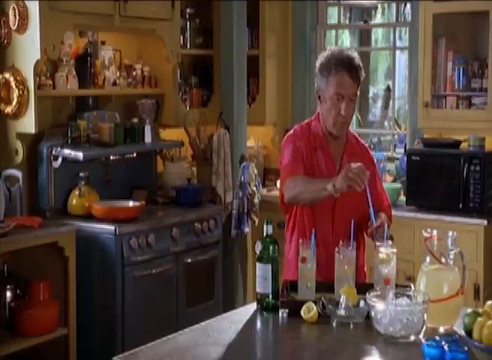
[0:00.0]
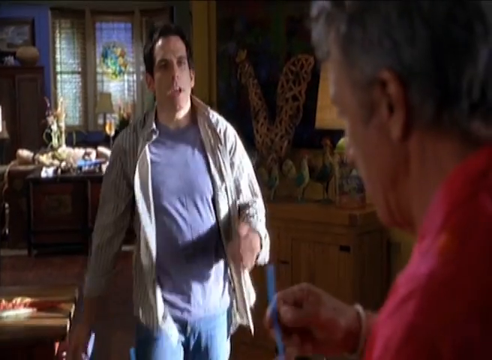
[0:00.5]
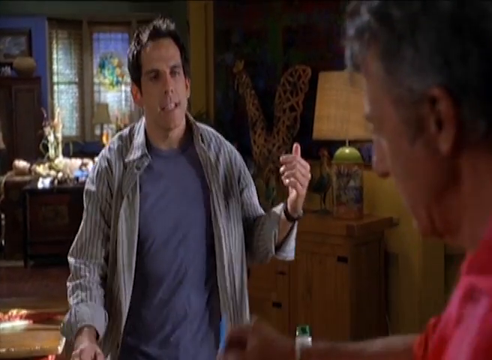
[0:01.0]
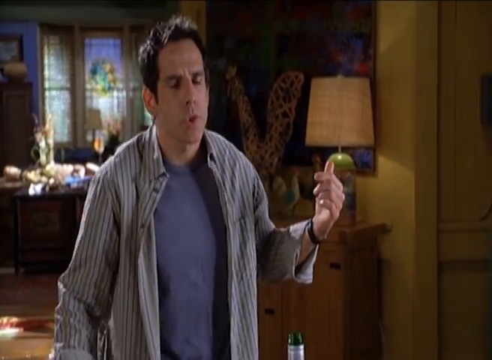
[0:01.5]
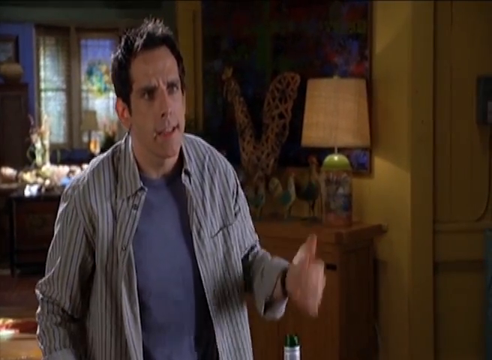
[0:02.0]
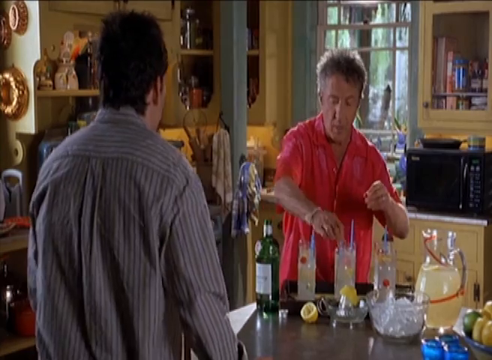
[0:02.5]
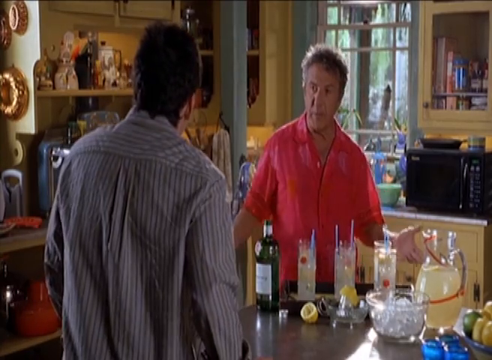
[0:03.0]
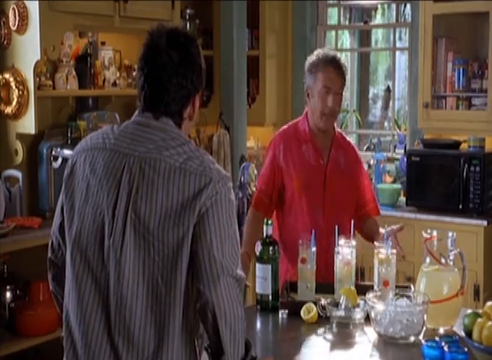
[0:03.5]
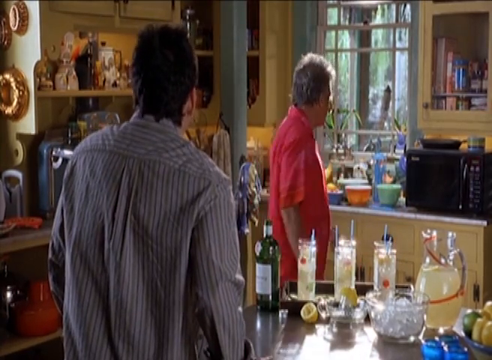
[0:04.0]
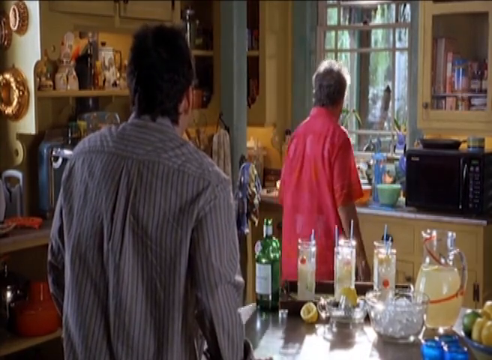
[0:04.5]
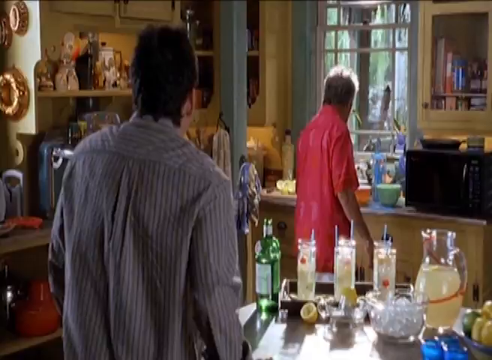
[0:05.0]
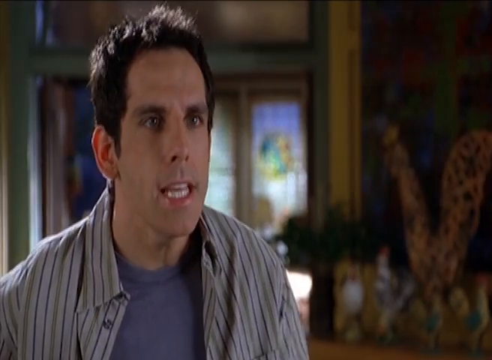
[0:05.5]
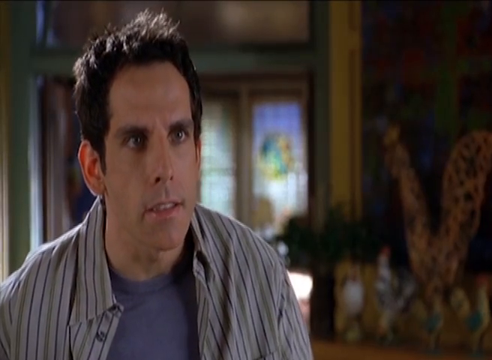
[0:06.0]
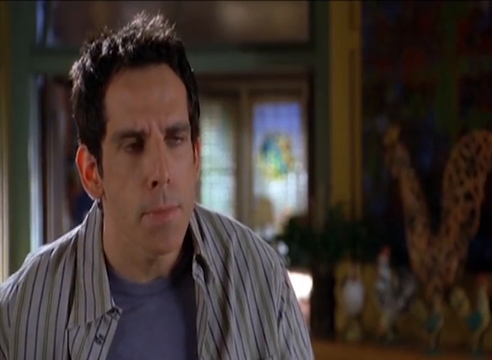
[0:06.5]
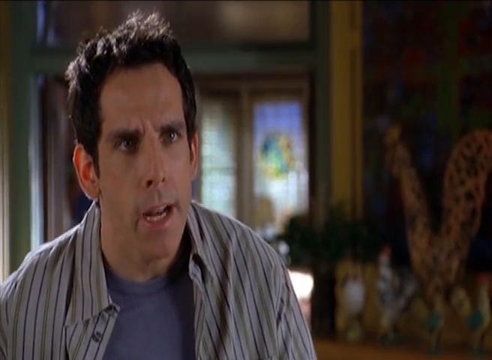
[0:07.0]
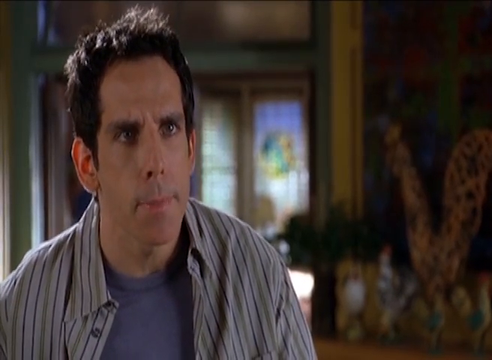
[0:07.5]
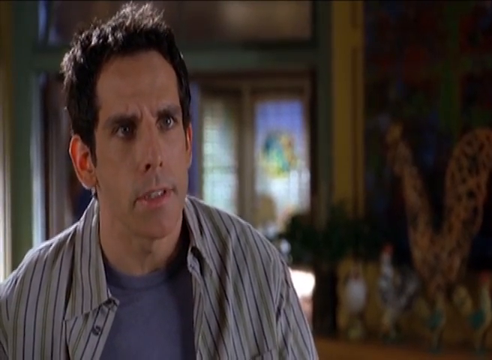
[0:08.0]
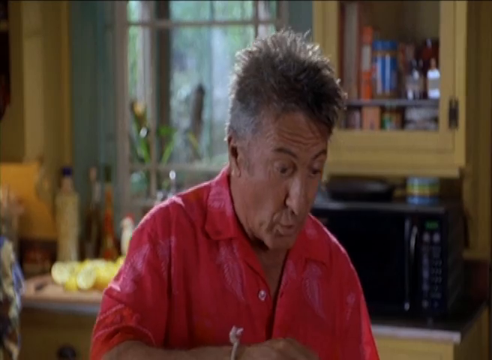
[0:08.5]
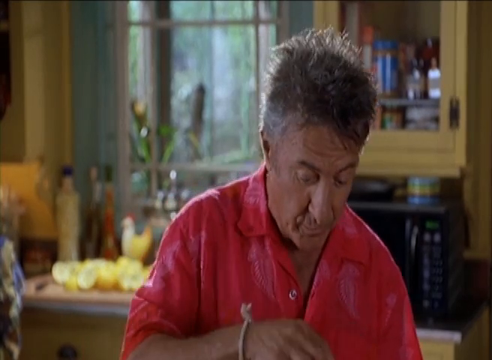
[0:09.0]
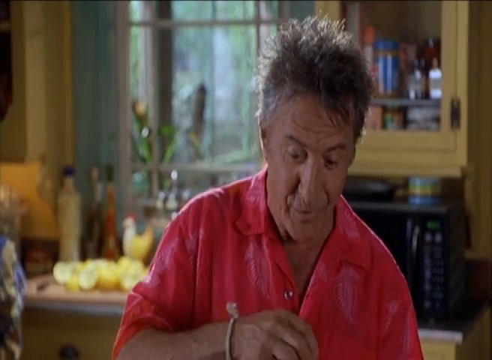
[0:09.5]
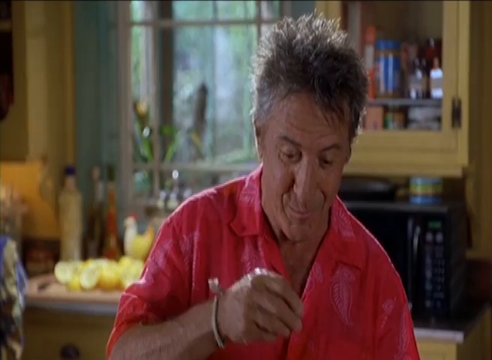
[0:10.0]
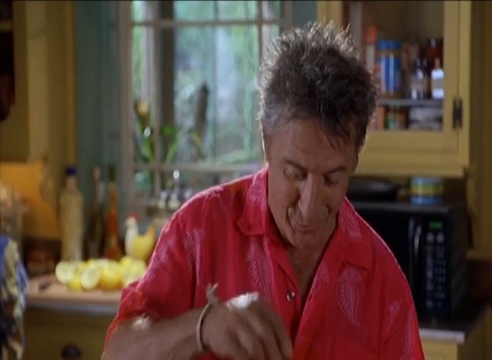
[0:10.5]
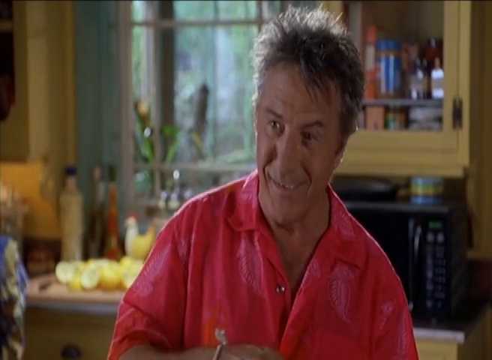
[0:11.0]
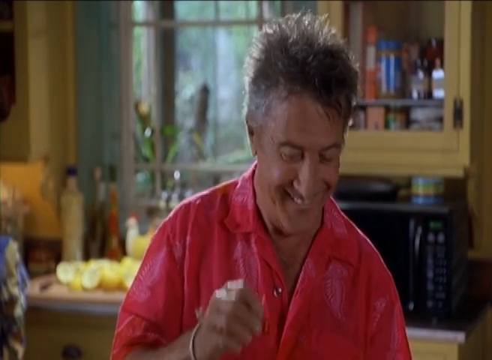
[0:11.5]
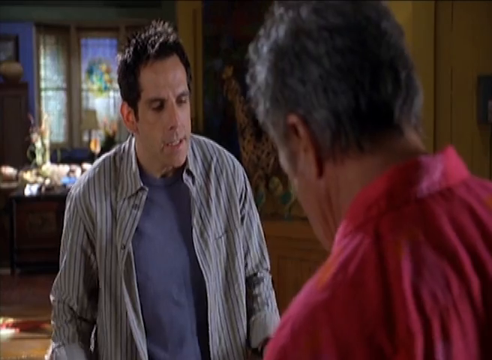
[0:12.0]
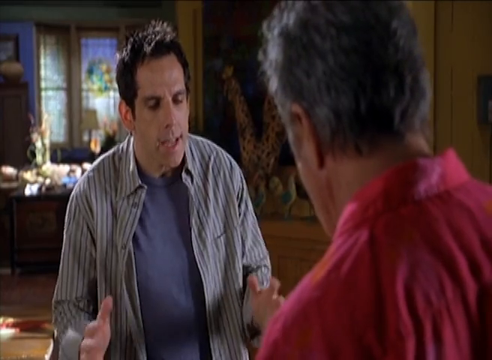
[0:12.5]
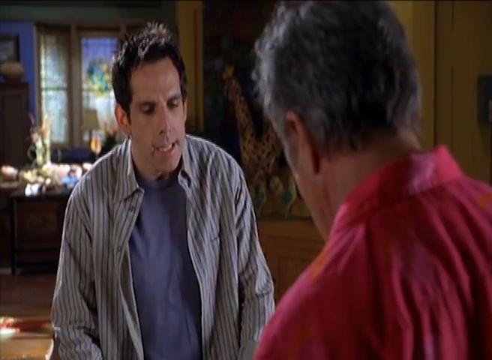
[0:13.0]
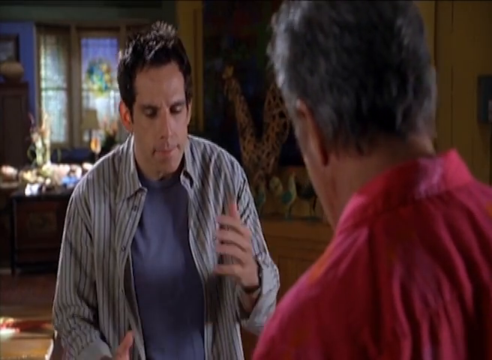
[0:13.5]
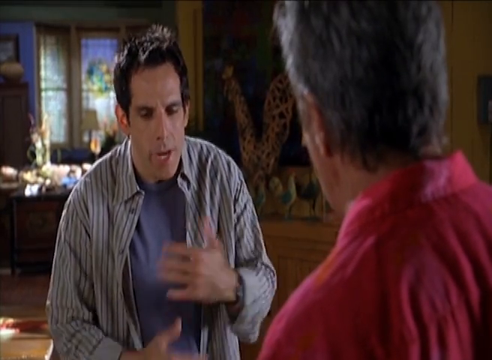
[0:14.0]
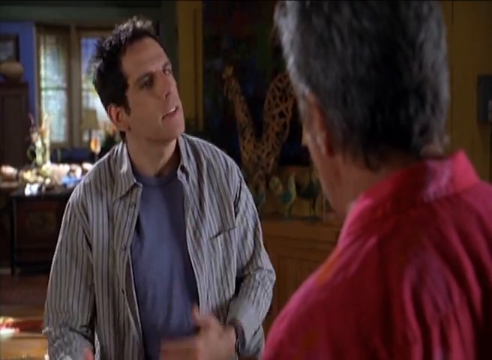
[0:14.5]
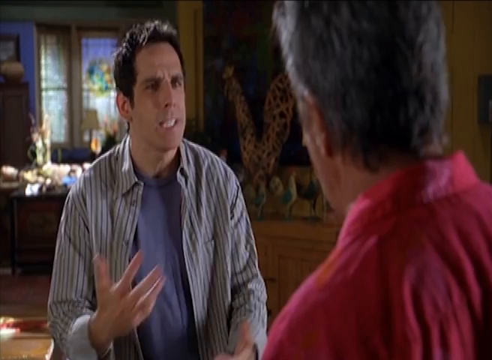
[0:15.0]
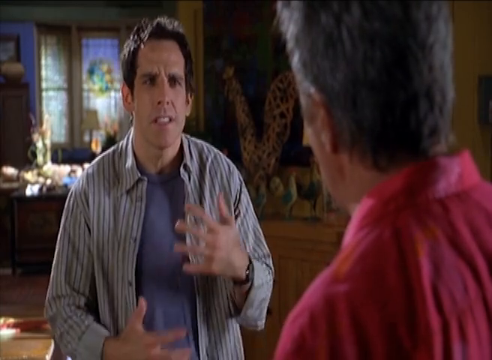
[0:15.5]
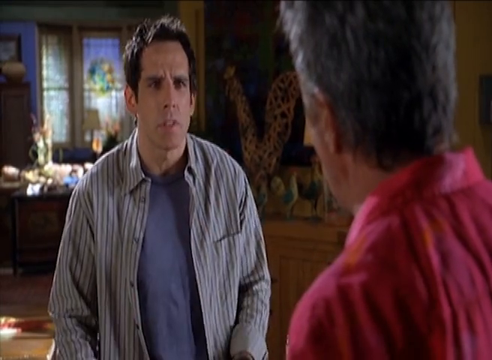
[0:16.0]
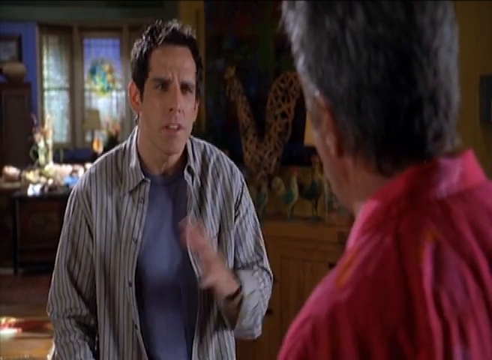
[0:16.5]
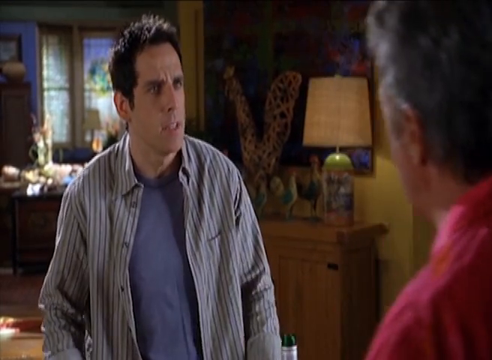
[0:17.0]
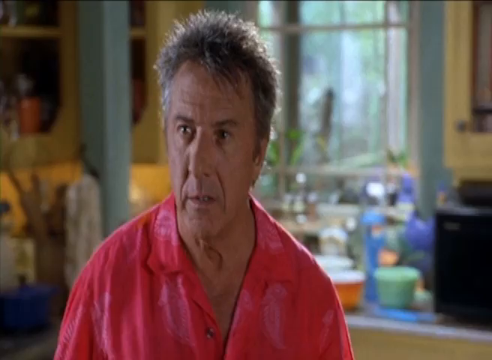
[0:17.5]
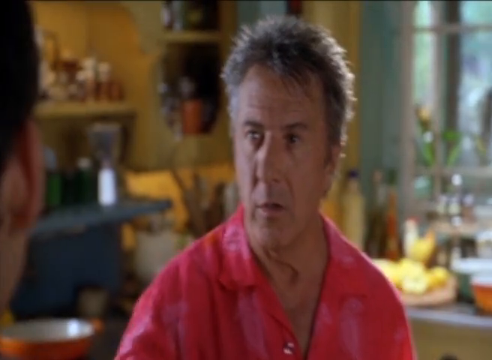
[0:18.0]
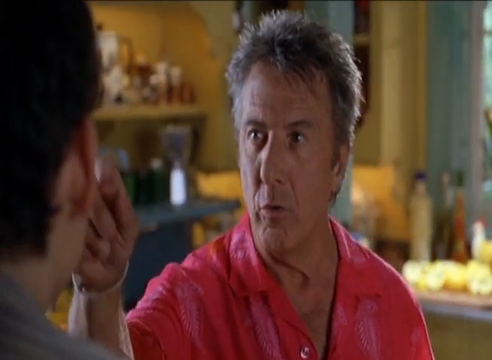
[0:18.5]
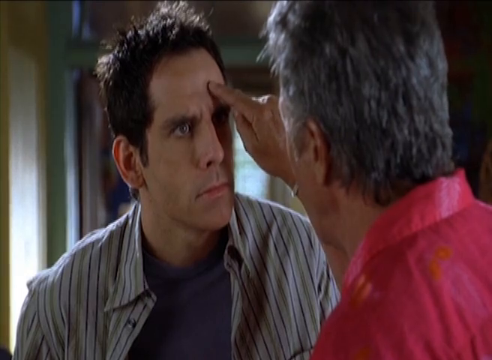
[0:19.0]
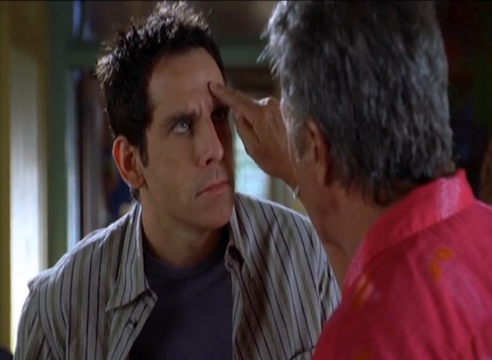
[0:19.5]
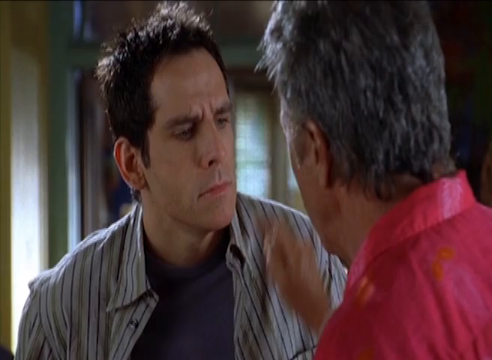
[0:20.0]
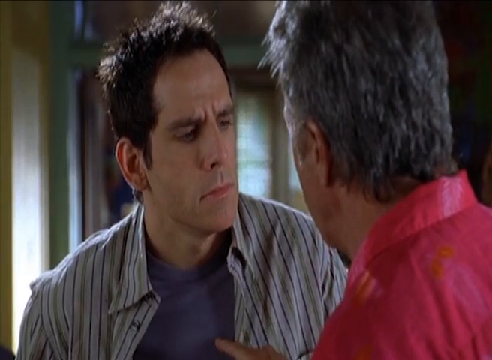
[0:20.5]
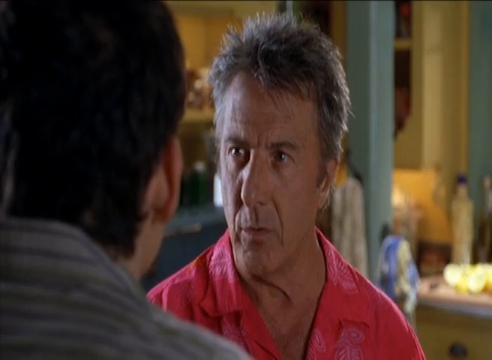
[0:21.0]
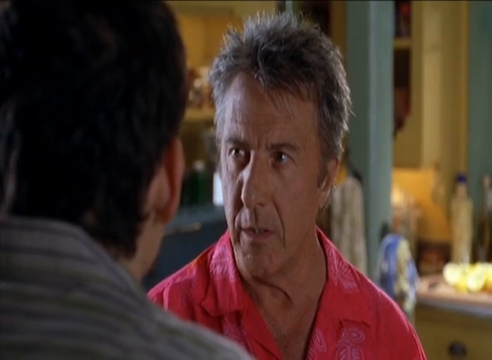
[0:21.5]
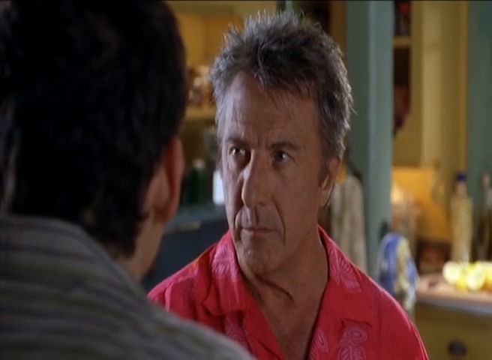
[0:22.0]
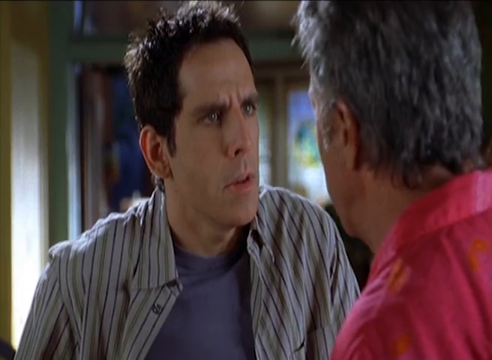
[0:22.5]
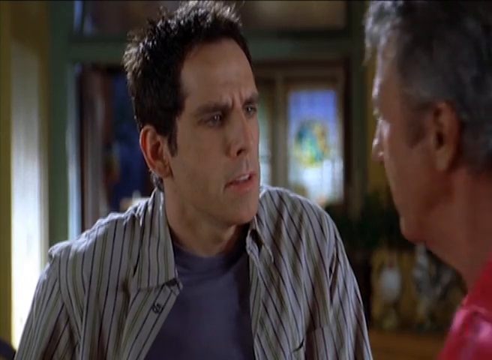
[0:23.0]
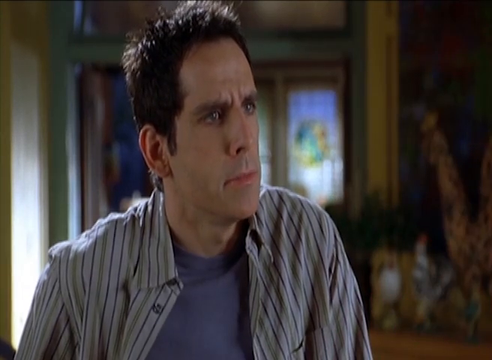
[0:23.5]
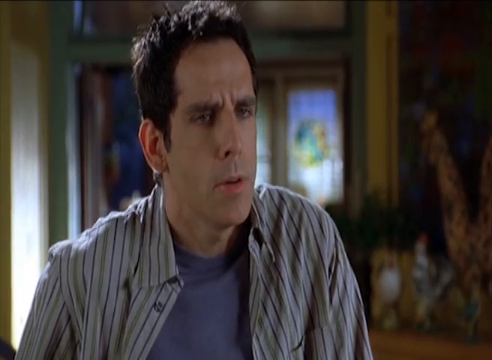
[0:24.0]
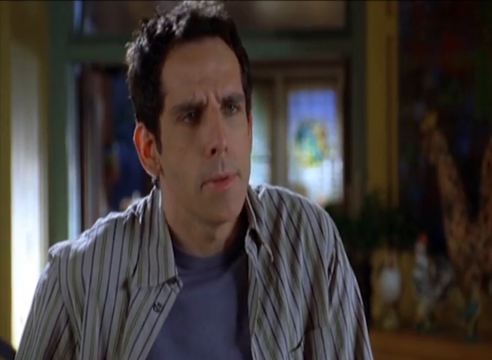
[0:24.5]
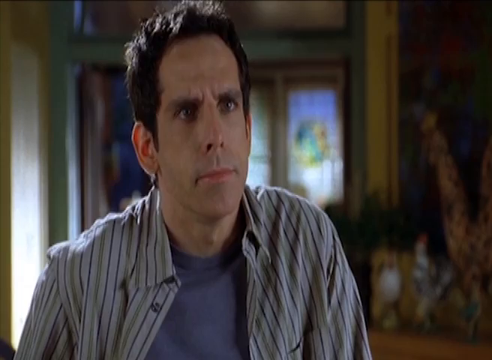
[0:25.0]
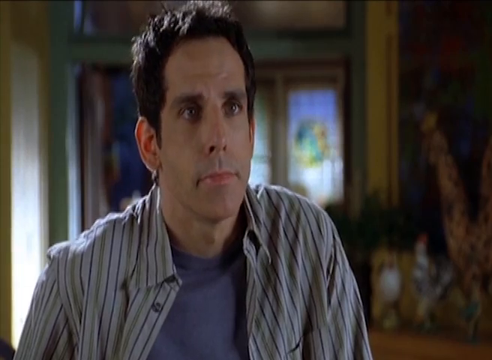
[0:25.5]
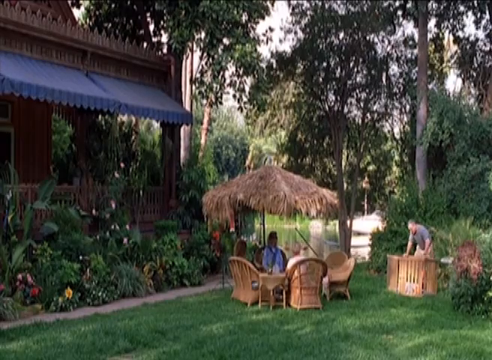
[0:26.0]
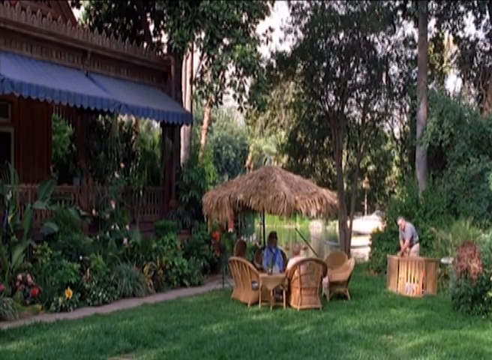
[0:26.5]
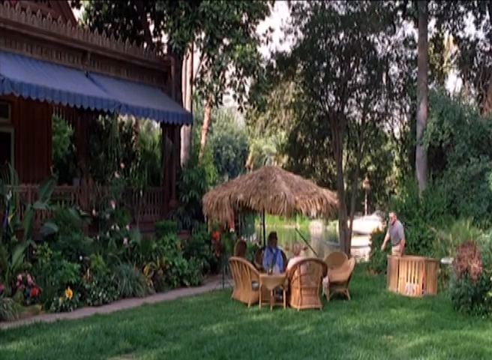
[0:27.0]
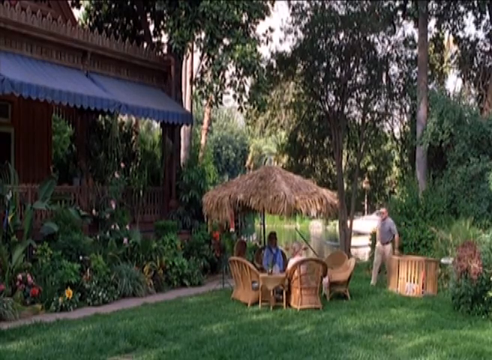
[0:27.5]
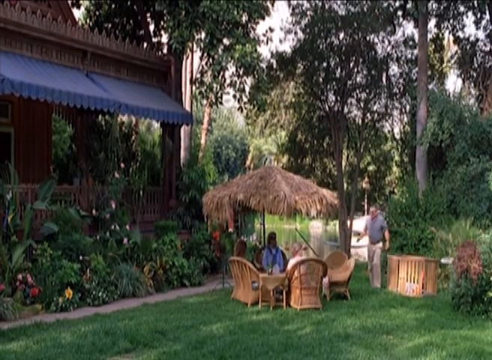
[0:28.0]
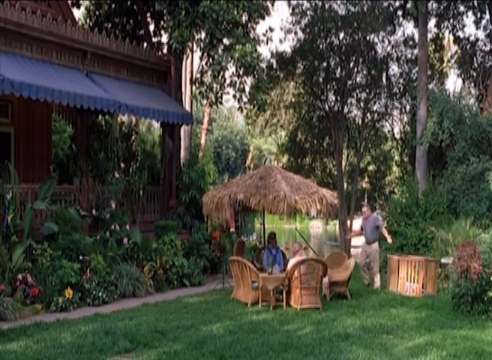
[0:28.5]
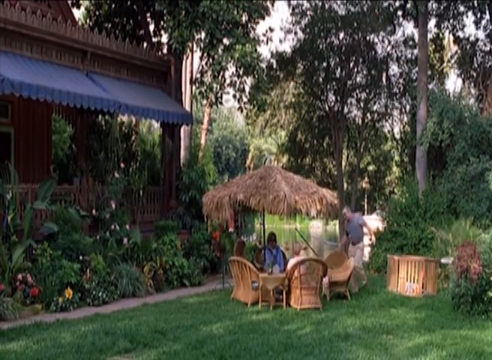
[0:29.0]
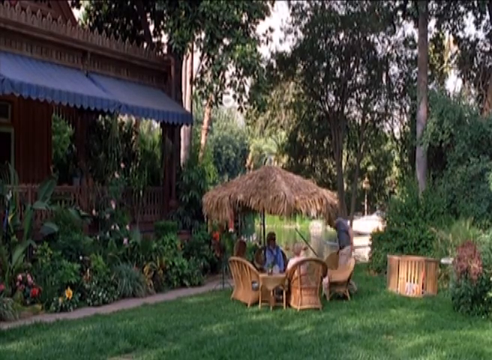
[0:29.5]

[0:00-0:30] An older man in a red shirt seems to be in his kitchen, mixing drinks like cocktails; in front of him are a pitcher of juice and a few glasses. A younger man comes in, wearing a blue shirt with a striped, unbuttoned shirt over it. He walks toward the older man, seems to be talking, and gestures with his left hand, thumb up. The scene switches: the older man faces the camera while the young man's back is toward it. The older man talks, gesturing with both hands, then turns around and goes to the kitchen counter, looking like he is checking on something. The shot moves to the younger man's face as he talks, then to the older man's face; he talks while looking down, seeming busy doing something, then grins and looks at the young man. Next the young man faces the camera, still talking, with the older man's back to the camera; the young man seems to gesture with his hands, and his face looks a little stressed. The older man looks surprised while looking at the young man and gestures with his right hand, then points his finger at the young man's forehead. The two talk back and forth. The scene changes to outdoors, with a house in the background in what looks like the backyard. There is a rattan table with rattan chairs around it and a rattan umbrella on top covering the whole table setting, and a wooden, sort of makeshift bar or table on the side. Of three people, two are sitting on the chairs while the third stands behind the makeshift bar. The man behind the bar goes around and walks toward the two seated people, looking like he is about to sit down.